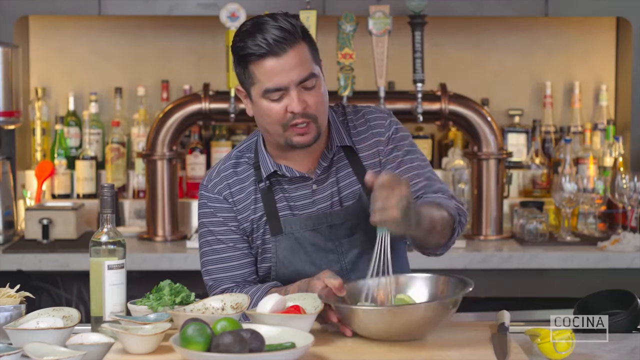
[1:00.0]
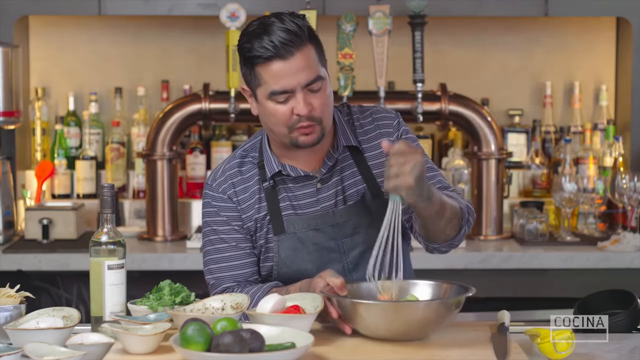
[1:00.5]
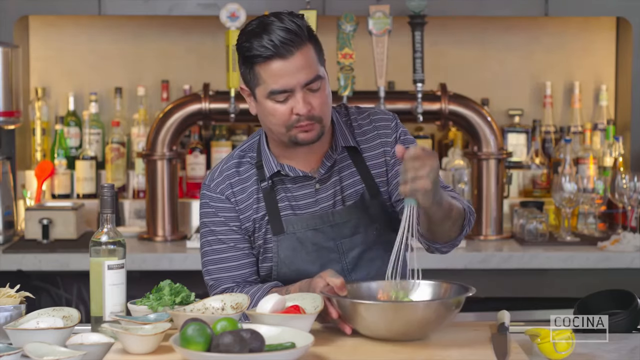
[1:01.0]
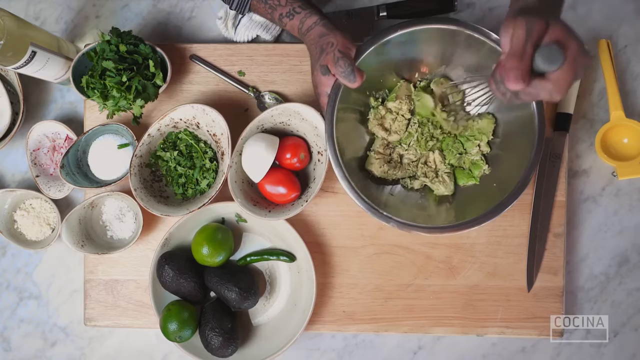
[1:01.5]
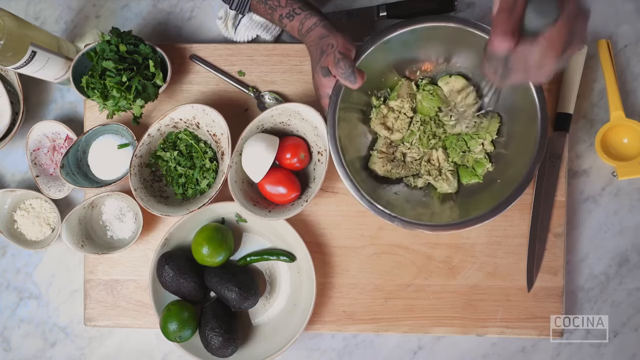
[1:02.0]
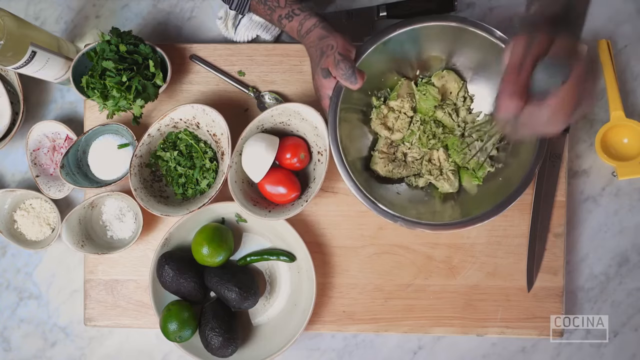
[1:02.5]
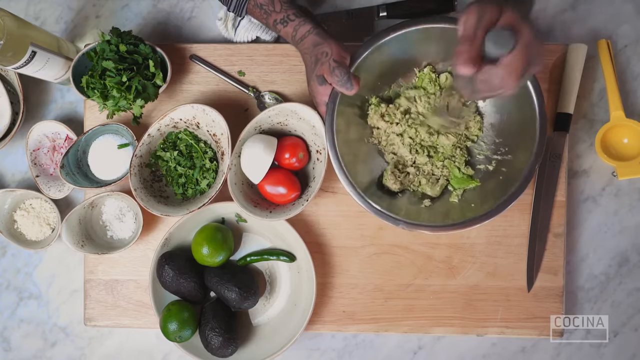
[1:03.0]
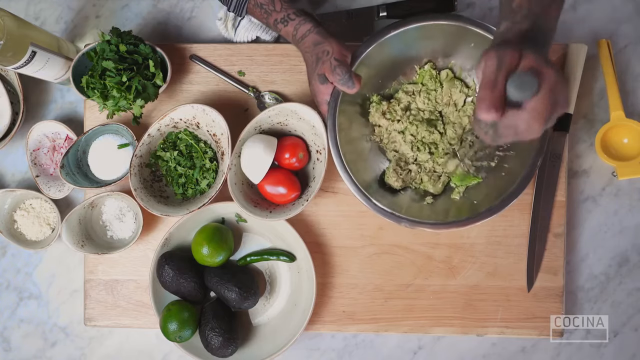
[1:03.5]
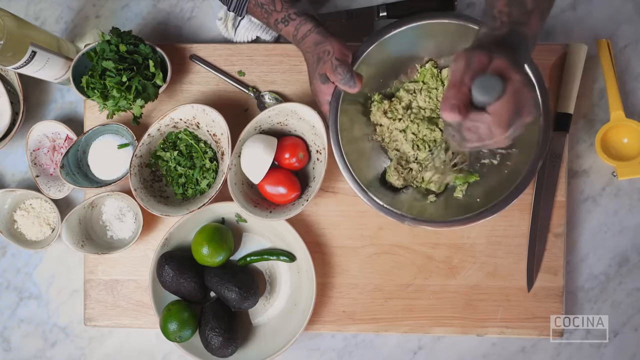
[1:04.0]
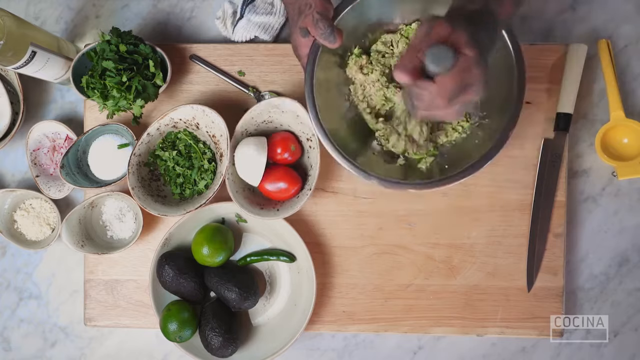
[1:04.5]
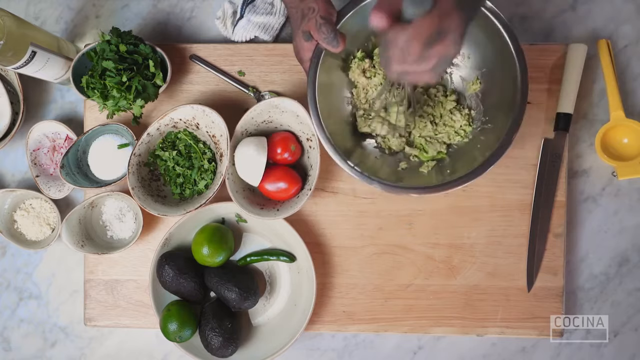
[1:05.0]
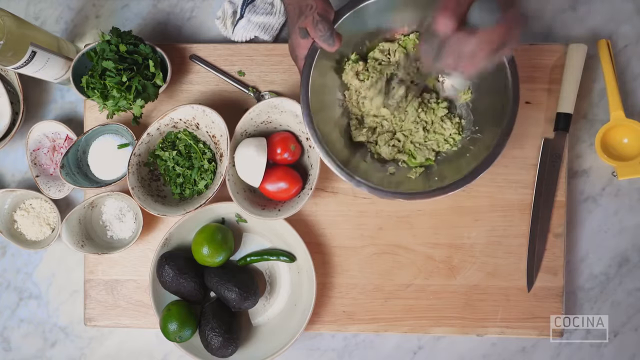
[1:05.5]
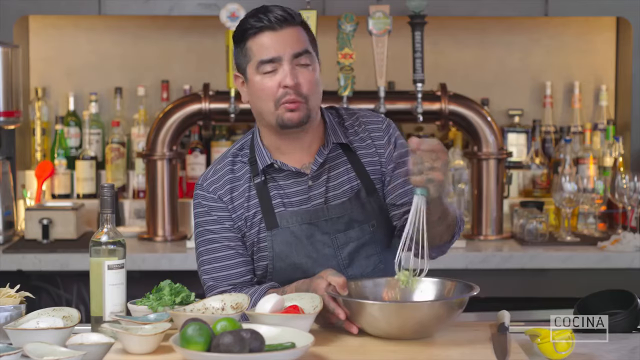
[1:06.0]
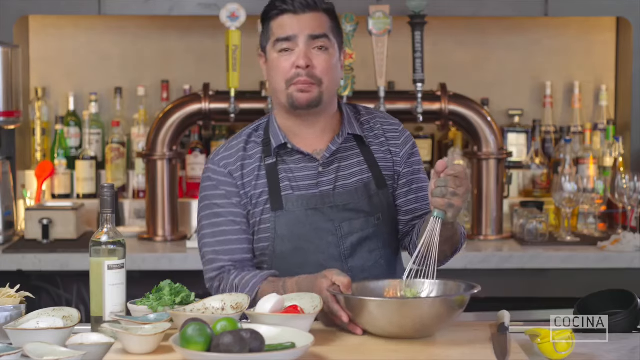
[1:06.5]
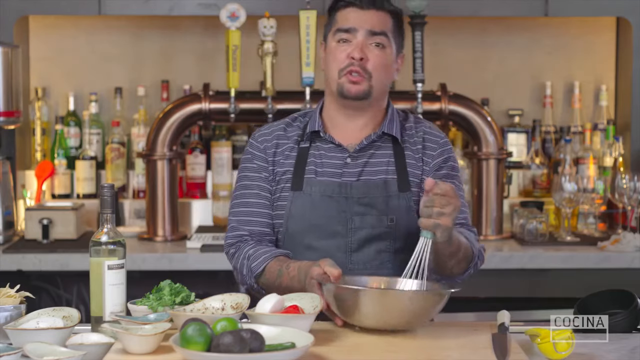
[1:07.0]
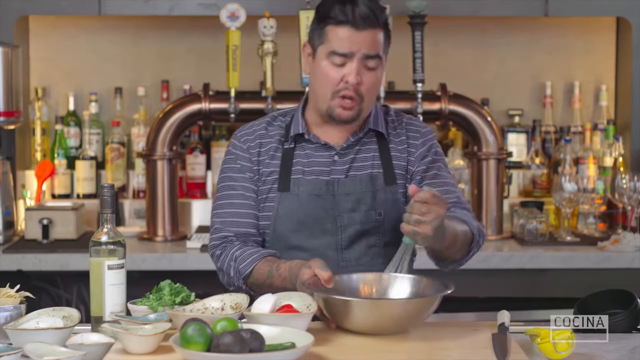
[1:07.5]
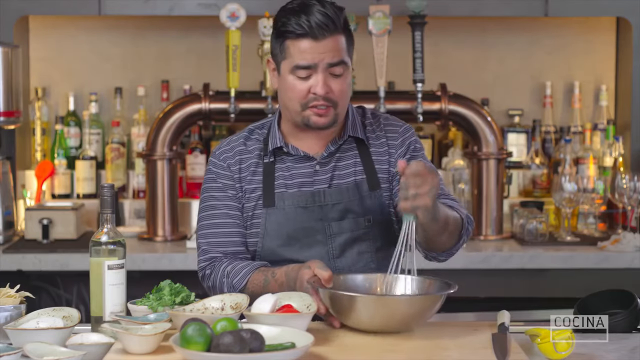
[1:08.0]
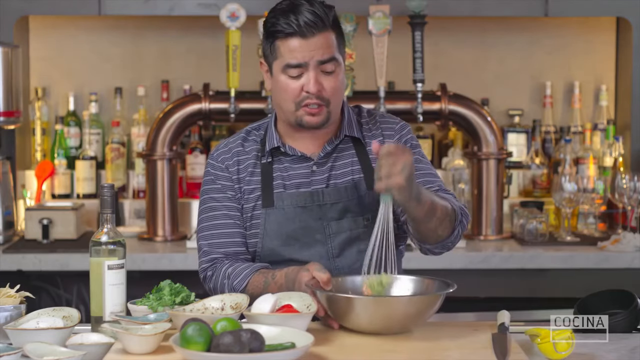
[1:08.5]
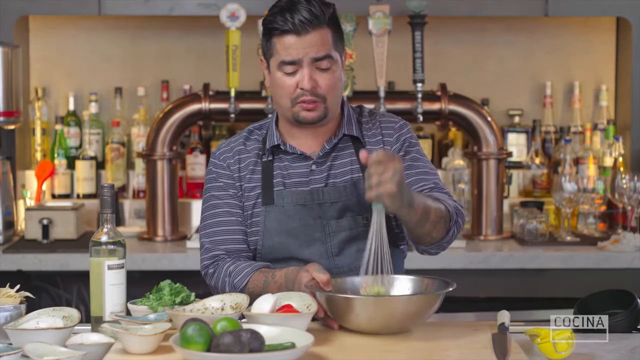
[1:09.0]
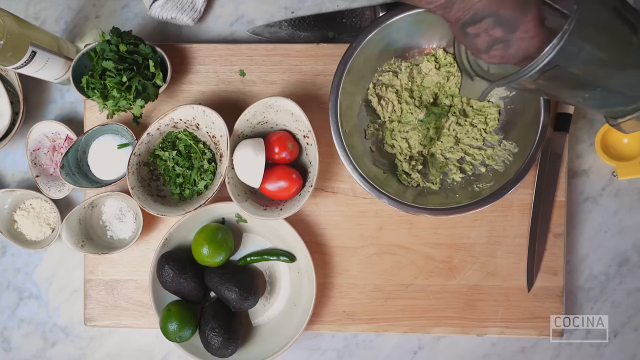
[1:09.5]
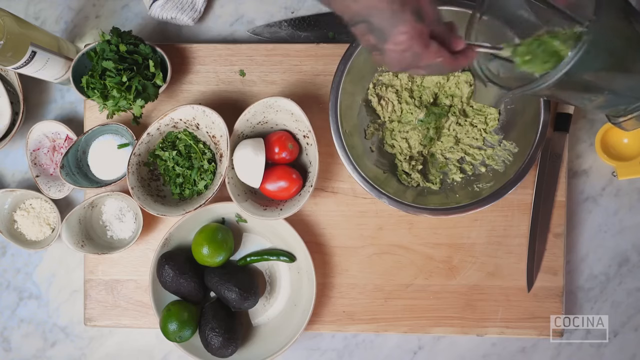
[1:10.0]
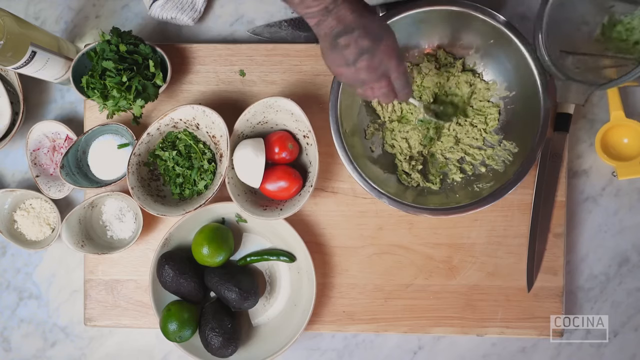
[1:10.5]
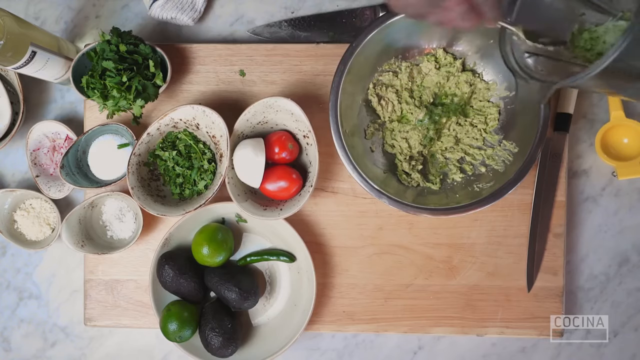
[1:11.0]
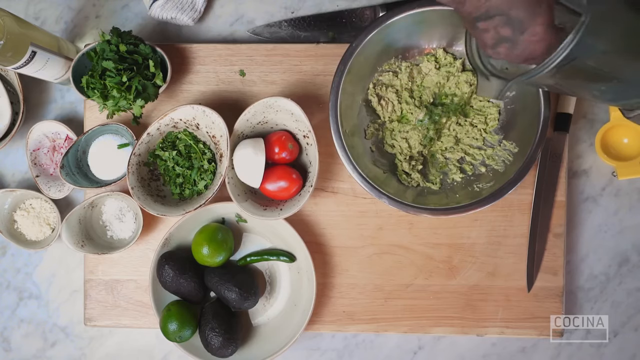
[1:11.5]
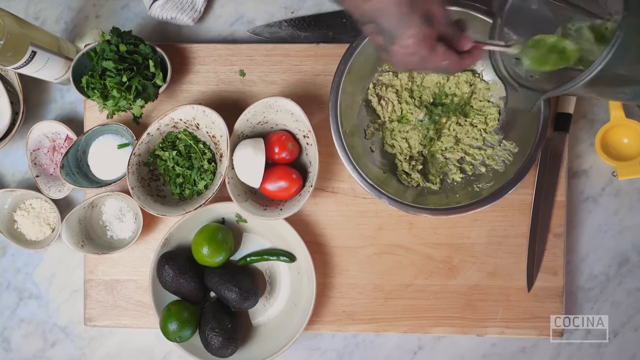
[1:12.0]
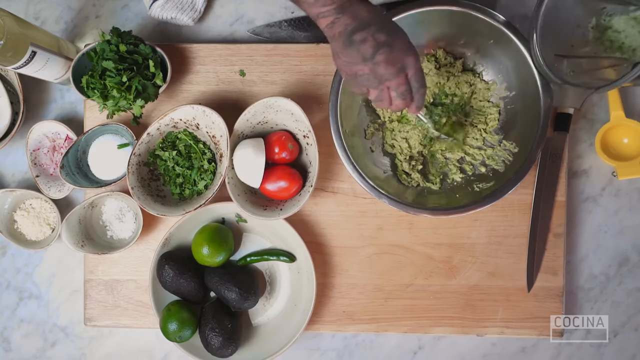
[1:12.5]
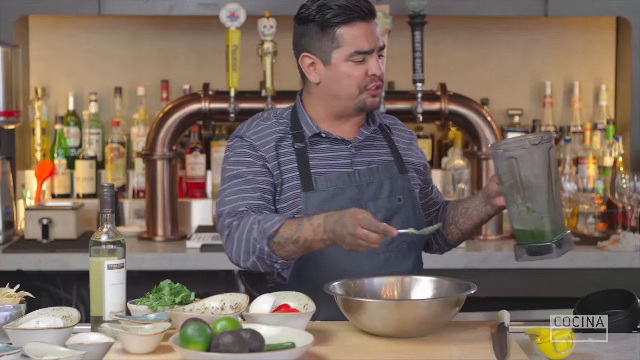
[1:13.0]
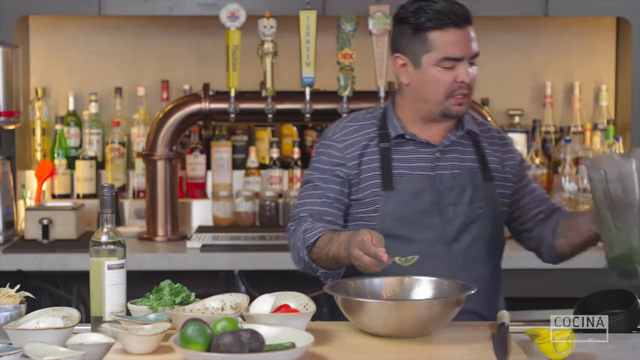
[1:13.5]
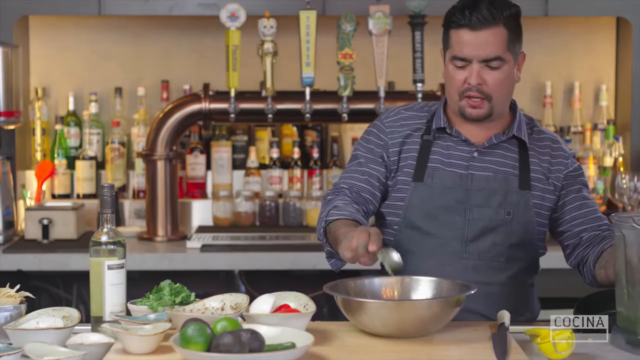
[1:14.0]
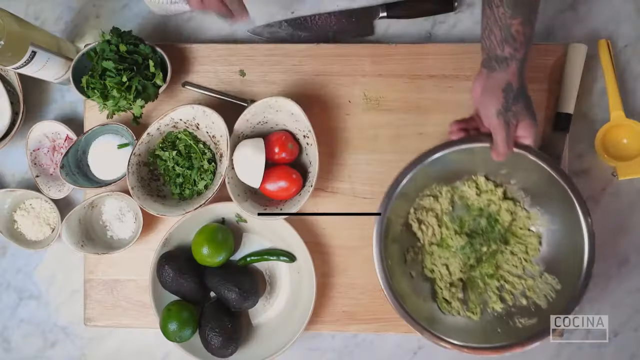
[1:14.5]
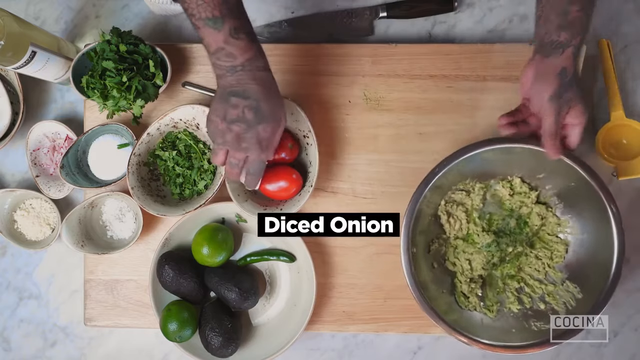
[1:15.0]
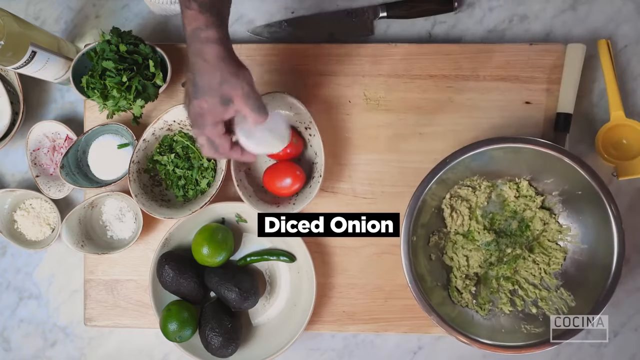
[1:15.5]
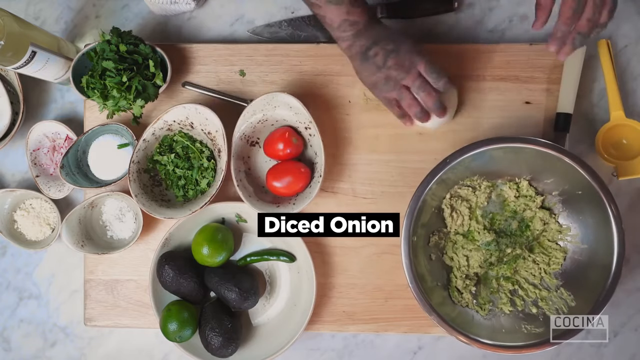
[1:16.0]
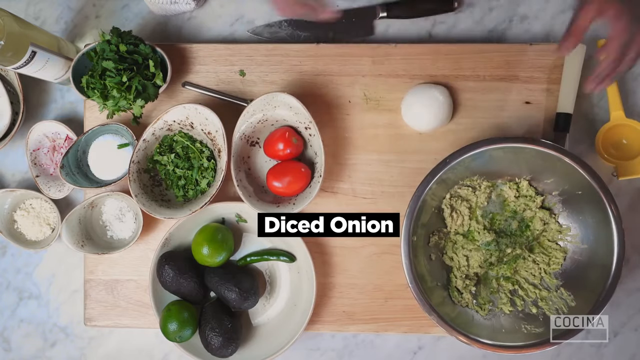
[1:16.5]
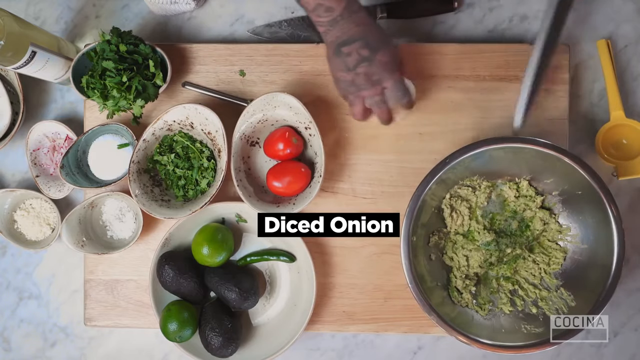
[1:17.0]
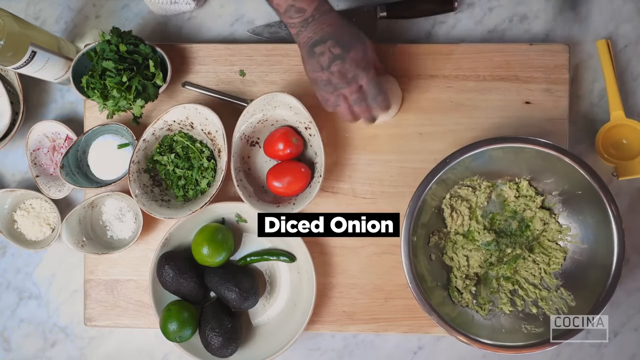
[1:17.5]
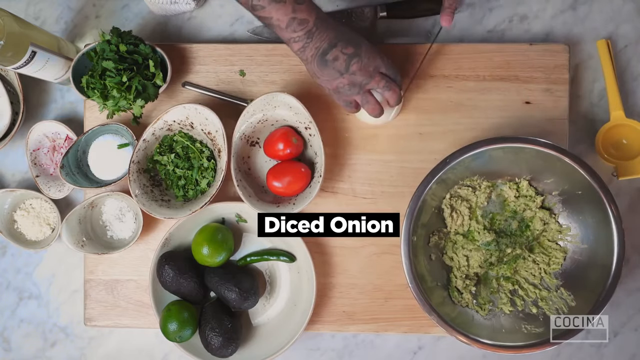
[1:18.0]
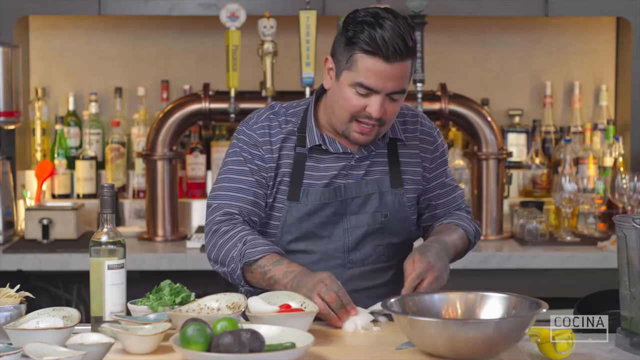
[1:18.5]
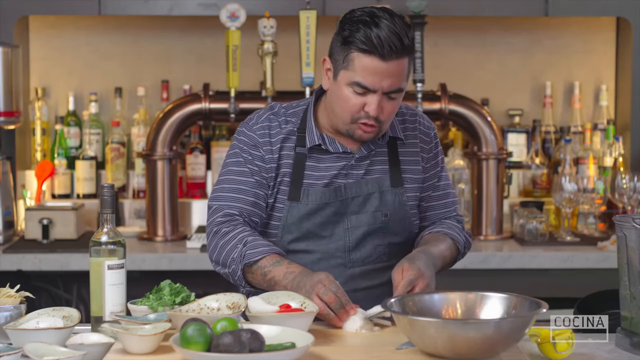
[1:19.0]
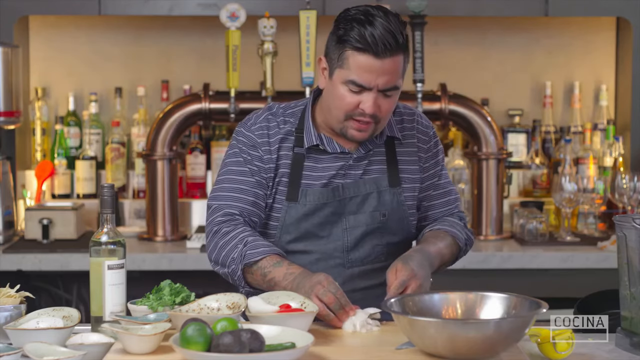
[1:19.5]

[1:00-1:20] A Mexican man with short black hair, a beard and a mustache stands behind a table facing the camera, wearing a blue and white striped shirt and a blue apron. He holds a large silver bowl with his right hand and mashes the ingredients inside with a metal whisk held in his left hand. Many ingredients are around him, and many liquor bottles are in the background. A top-down view shows avocados inside the bowl being mashed. He talks to the camera more as he continues mashing. He then takes a green mixture out of the blender, scooping it with a metal spoon in his right hand, and mixes it into the silver bowl. White text reads "diced onions", and in a top-down view the man dices a white onion.